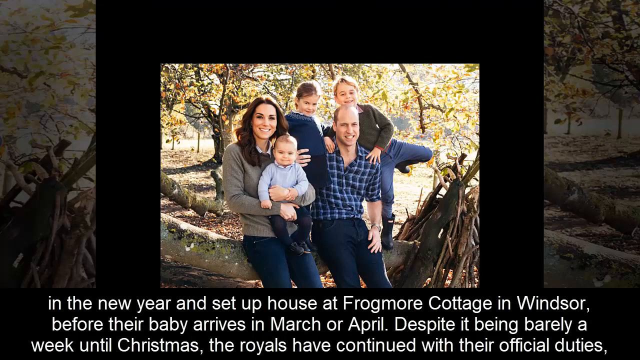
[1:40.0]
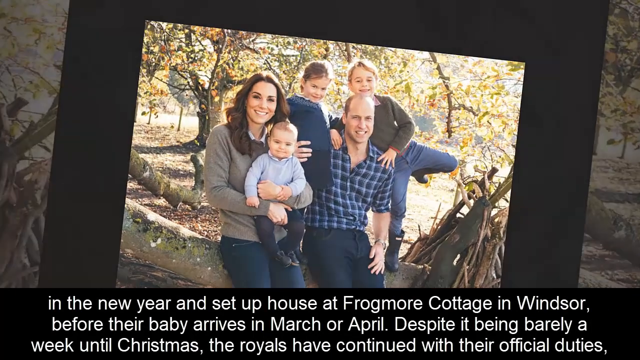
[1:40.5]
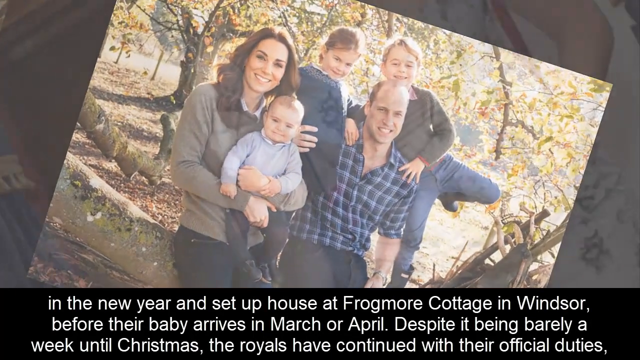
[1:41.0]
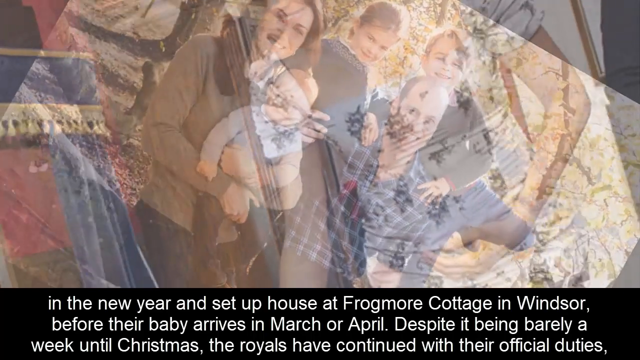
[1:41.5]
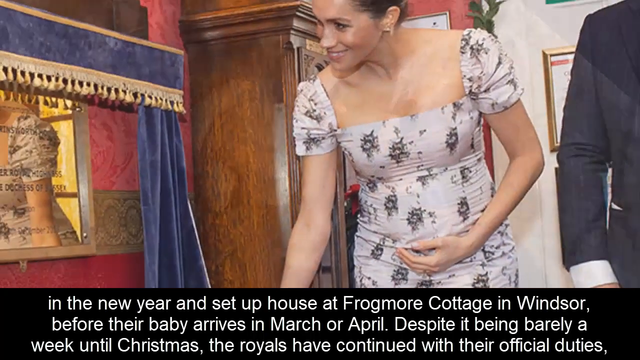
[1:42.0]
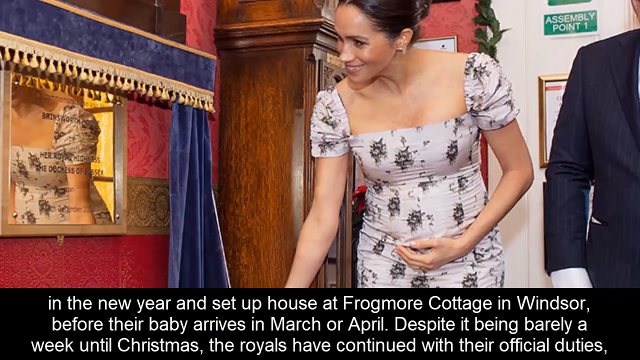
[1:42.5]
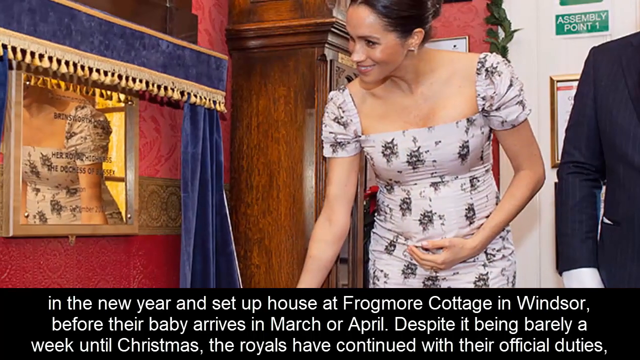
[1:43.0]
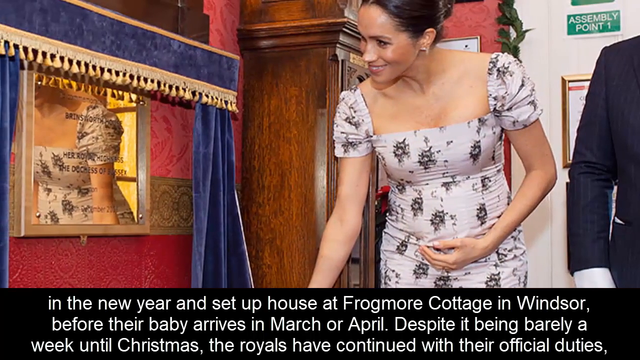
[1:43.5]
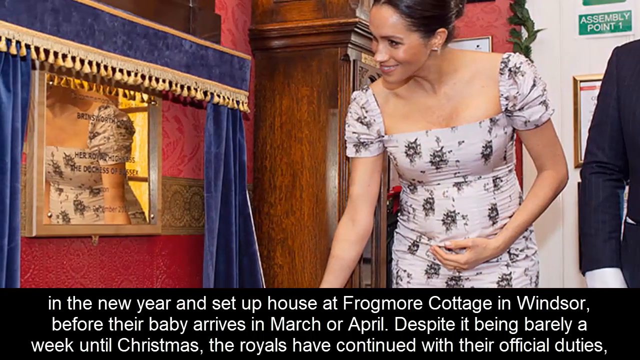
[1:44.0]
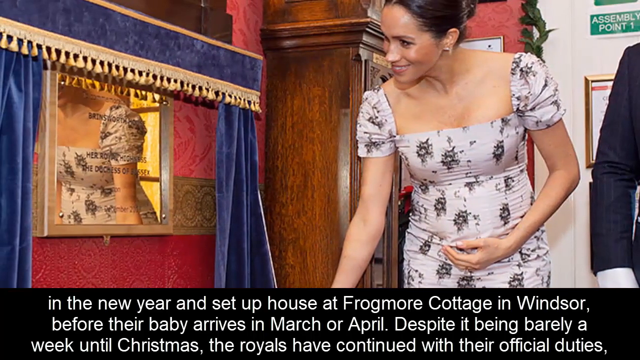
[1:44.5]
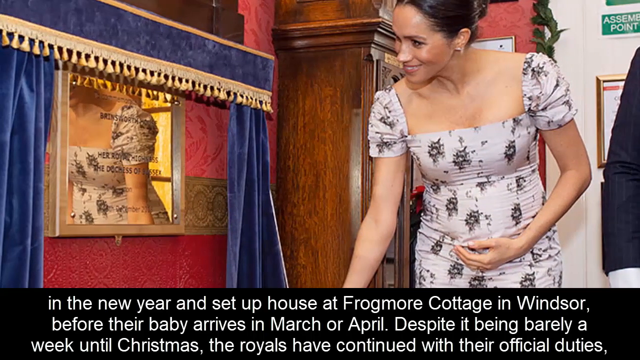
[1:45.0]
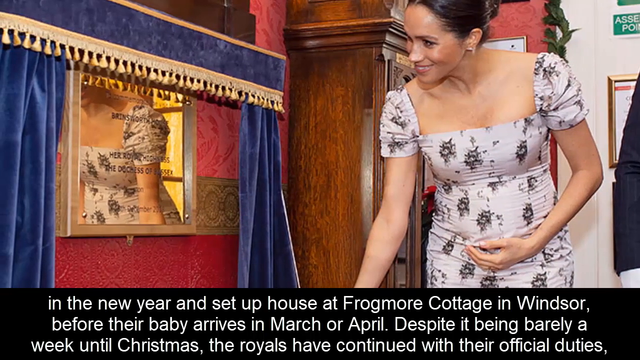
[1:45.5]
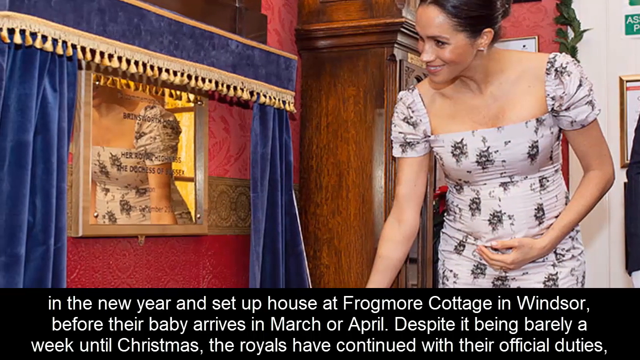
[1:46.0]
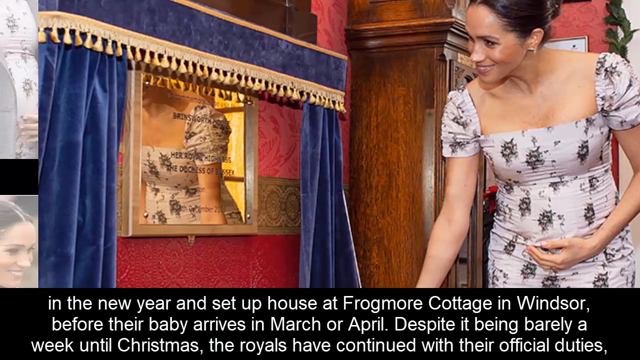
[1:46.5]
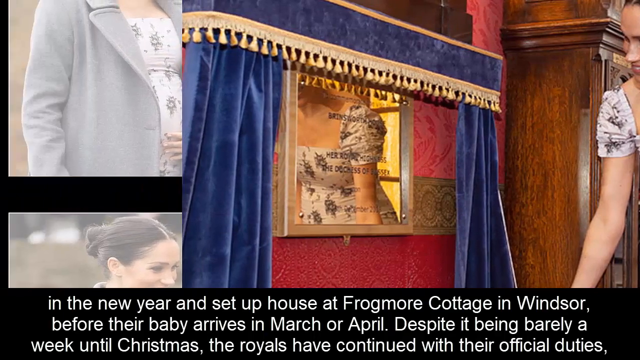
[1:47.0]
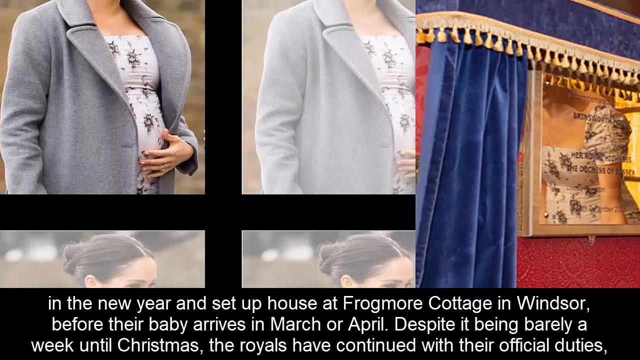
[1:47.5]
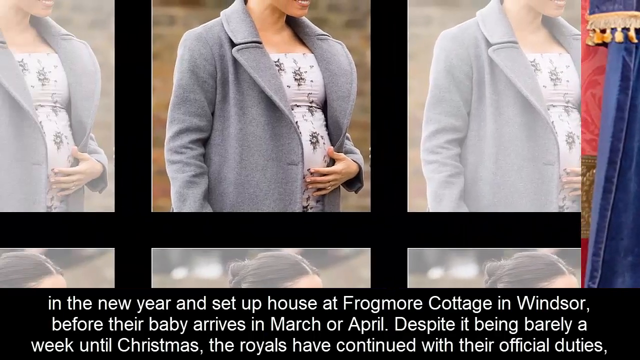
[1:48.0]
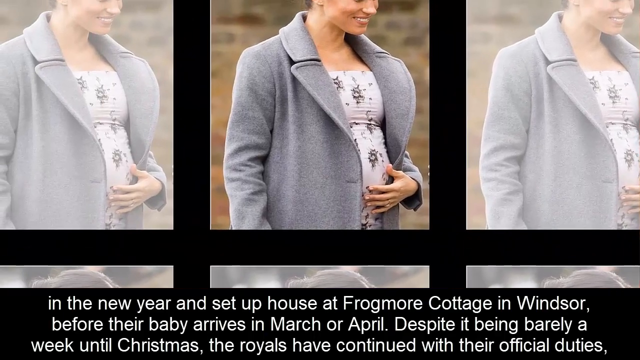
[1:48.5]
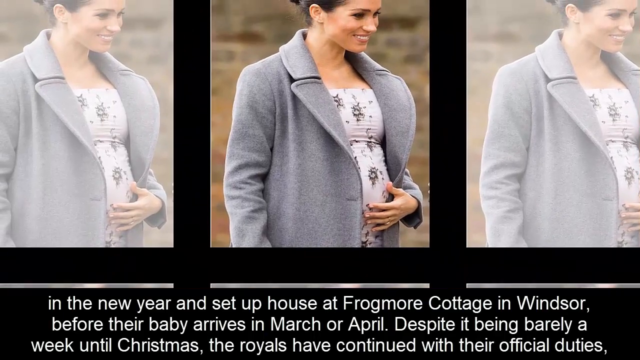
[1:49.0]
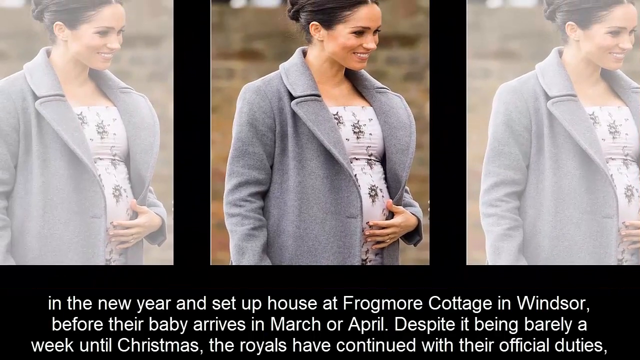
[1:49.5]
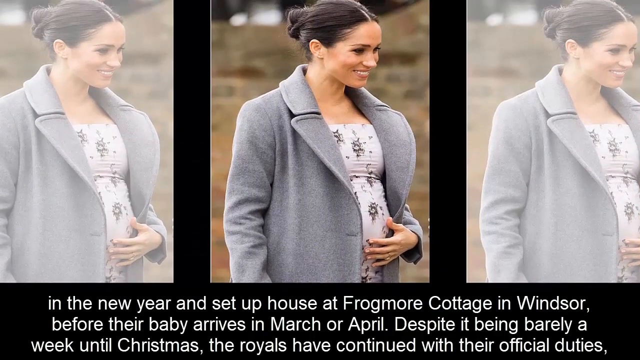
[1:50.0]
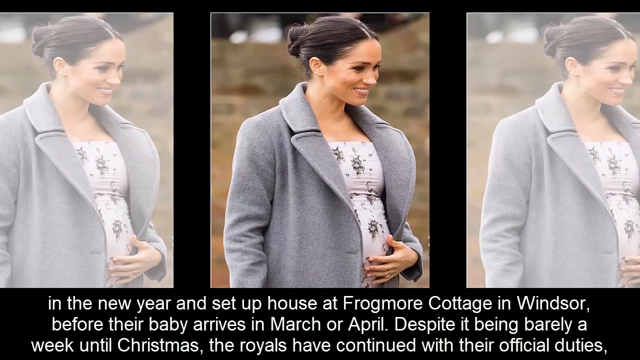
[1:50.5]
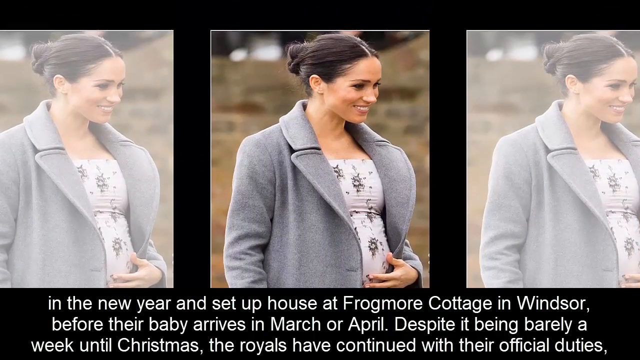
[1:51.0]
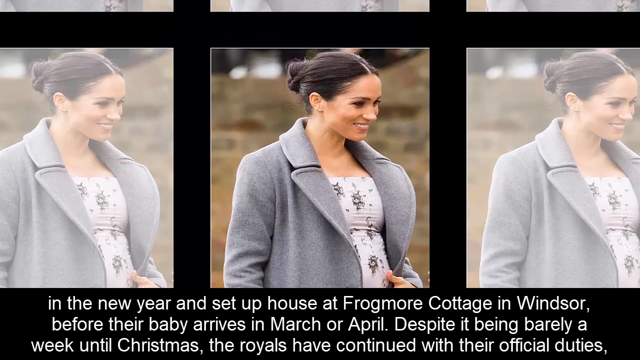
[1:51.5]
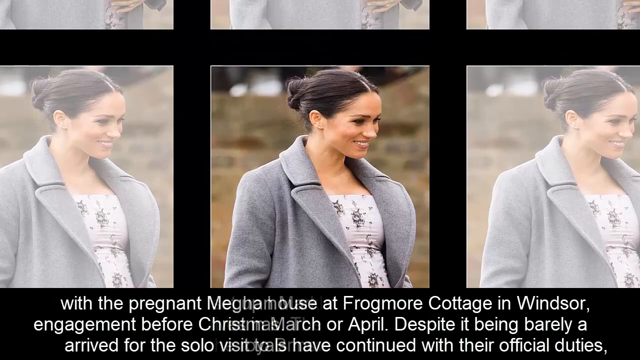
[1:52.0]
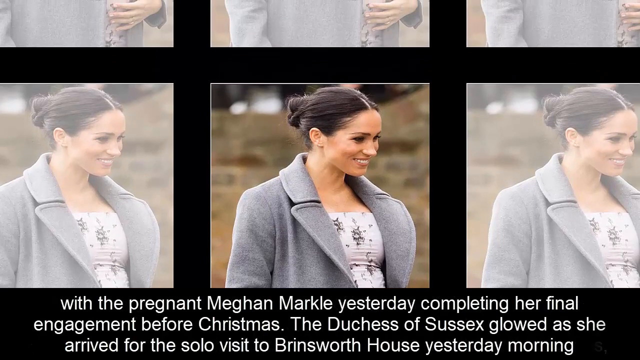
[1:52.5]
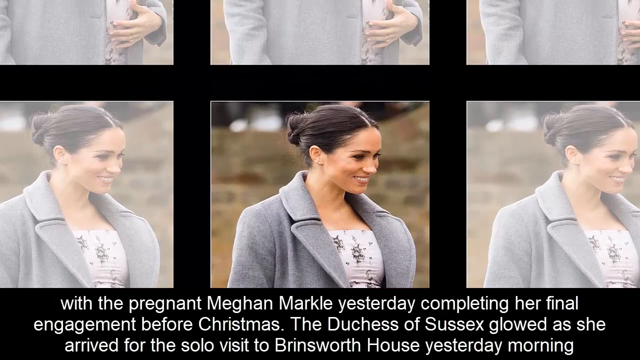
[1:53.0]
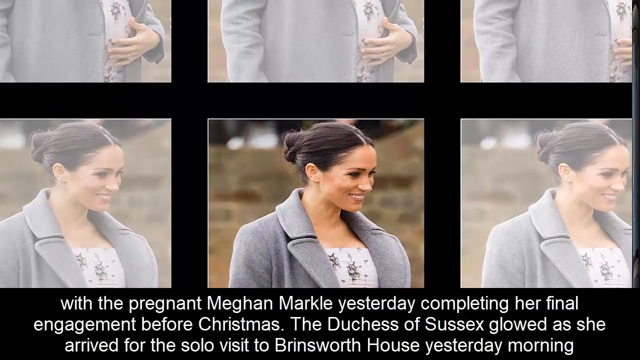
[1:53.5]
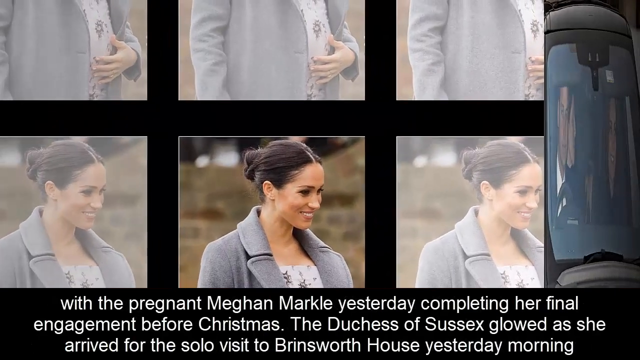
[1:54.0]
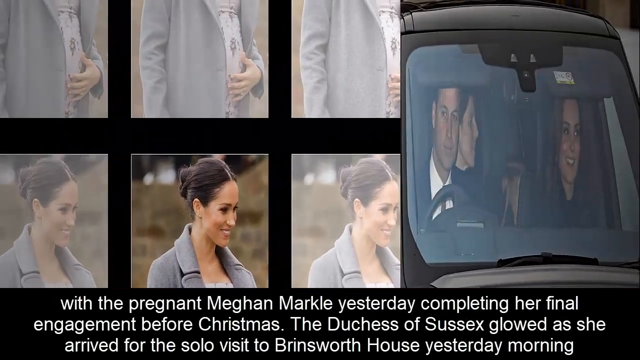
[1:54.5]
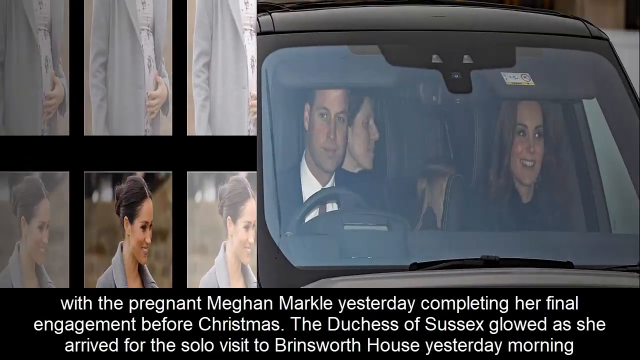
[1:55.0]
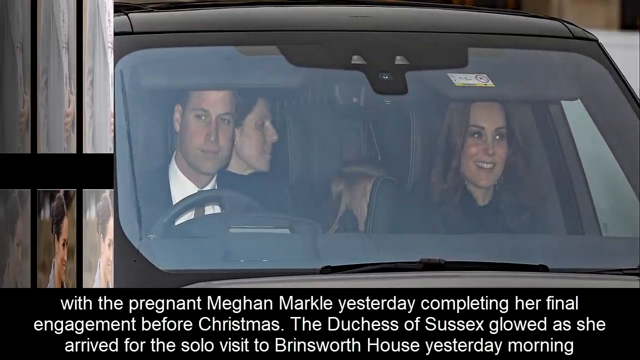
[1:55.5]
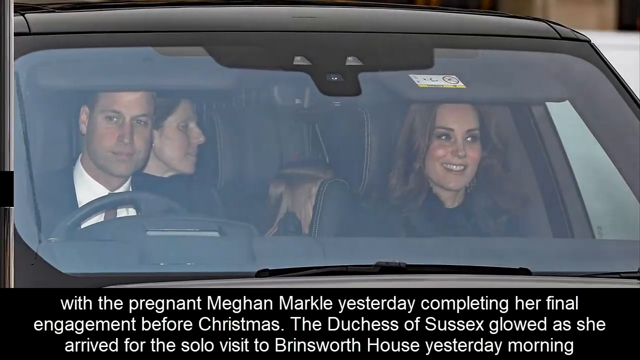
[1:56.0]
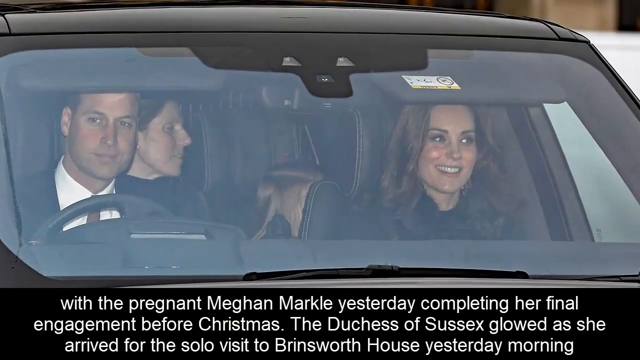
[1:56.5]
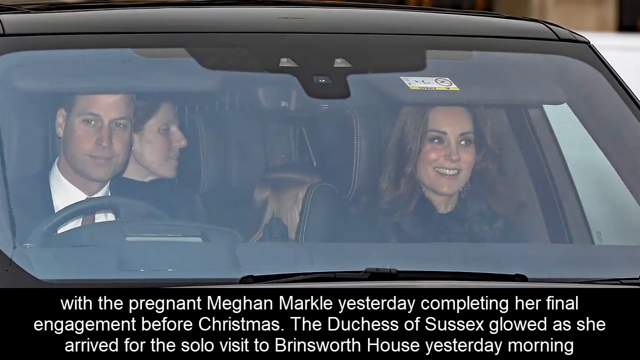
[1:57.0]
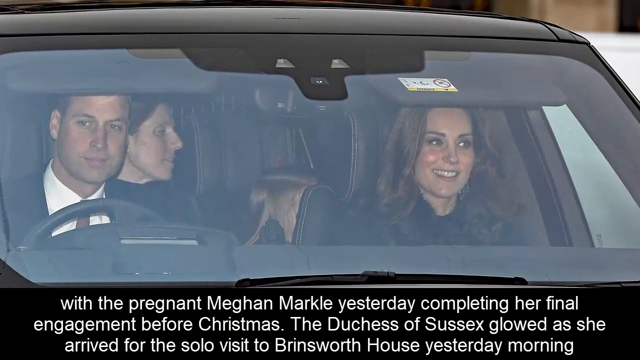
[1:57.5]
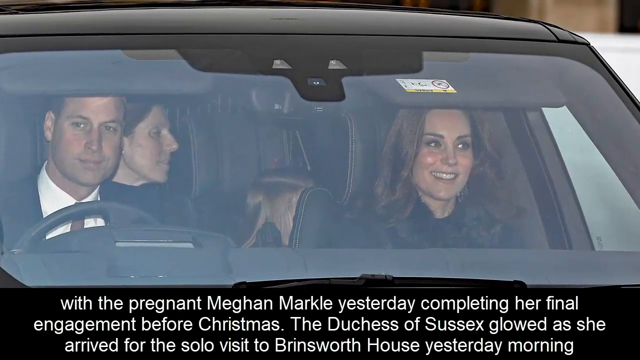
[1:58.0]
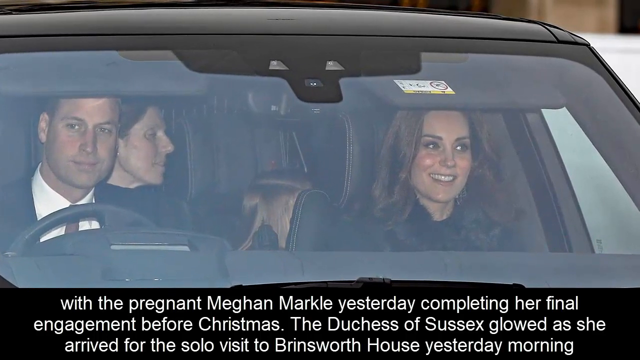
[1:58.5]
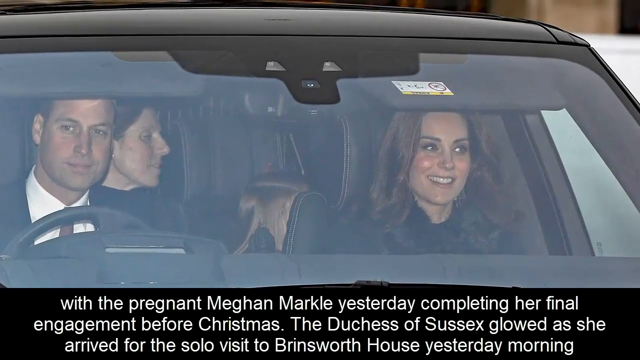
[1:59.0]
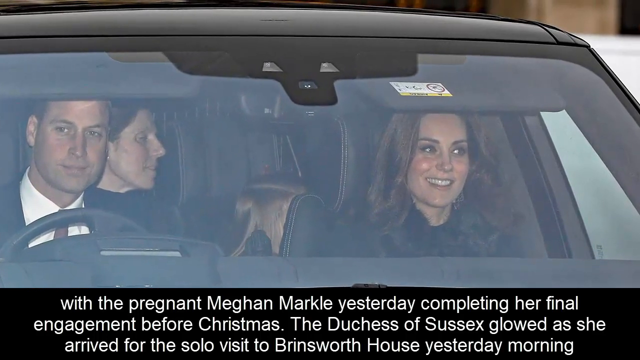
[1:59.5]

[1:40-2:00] The prince sits on what looks like a tree branch with his family: his wife holds a baby, a girl is in the middle between them, and a boy hangs on his father's shoulder on the left-hand side. The video zooms into the family photo and fades into a shot of a pregnant Meghan in a short white dress with black spots. Next comes a look at what seems to be something in the royal palace, then more paparazzi shots of her holding her pregnant stomach, wearing a long grey trench coat and smiling. The image slides up and then turns to the right, showing more paparazzi shots of the brother's family in the car.